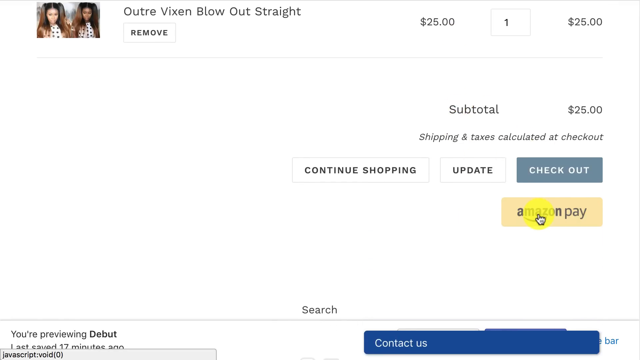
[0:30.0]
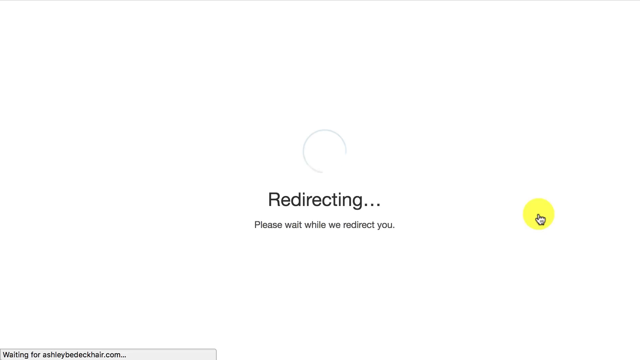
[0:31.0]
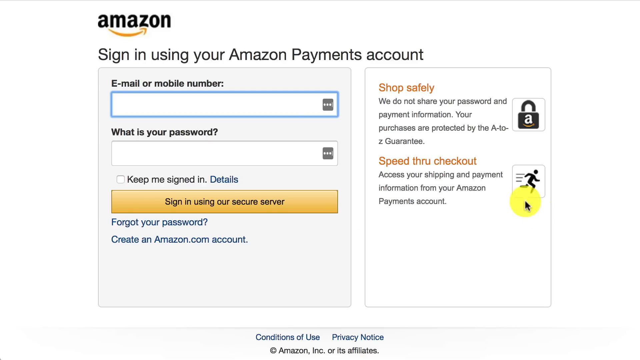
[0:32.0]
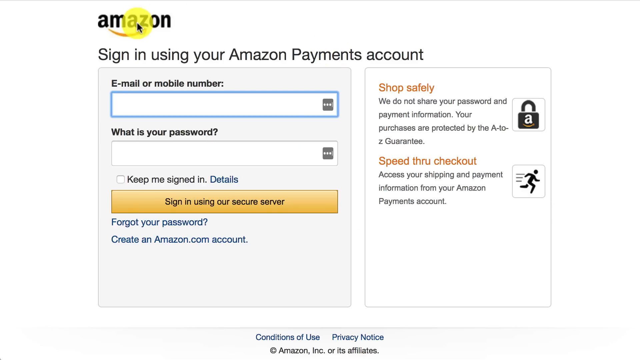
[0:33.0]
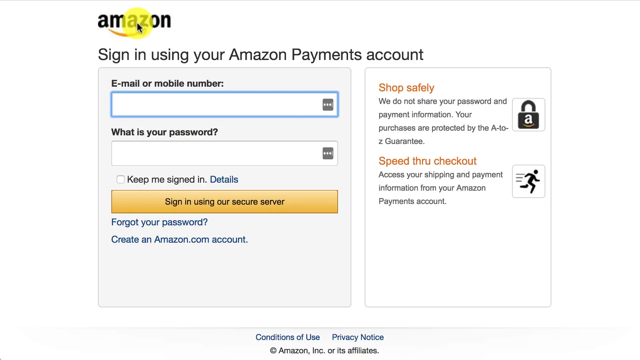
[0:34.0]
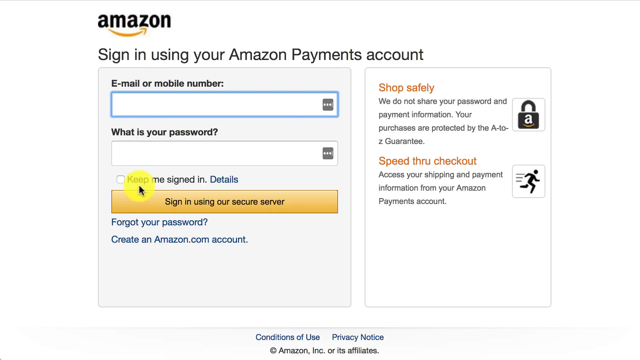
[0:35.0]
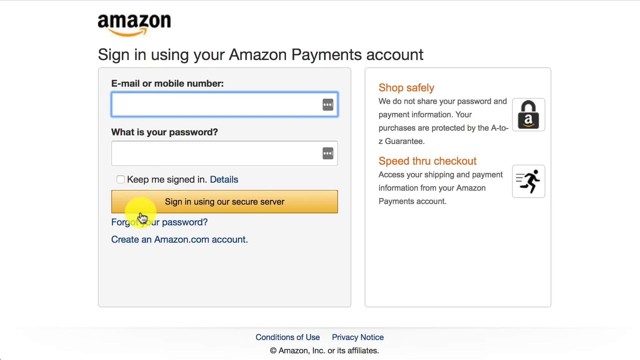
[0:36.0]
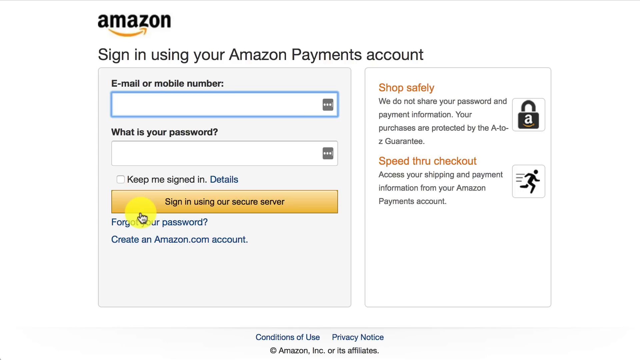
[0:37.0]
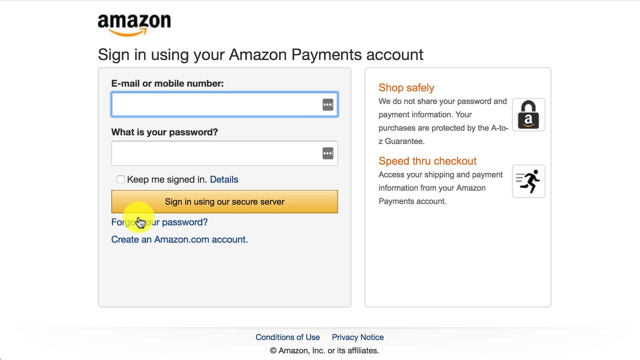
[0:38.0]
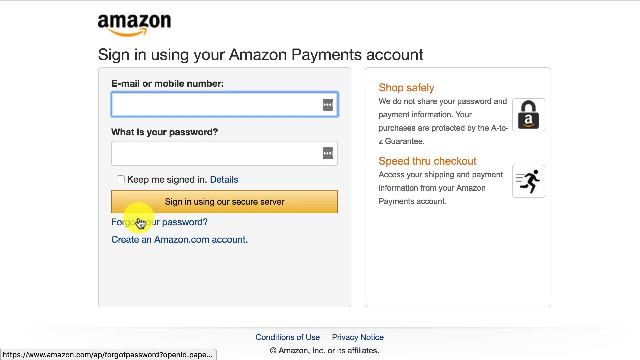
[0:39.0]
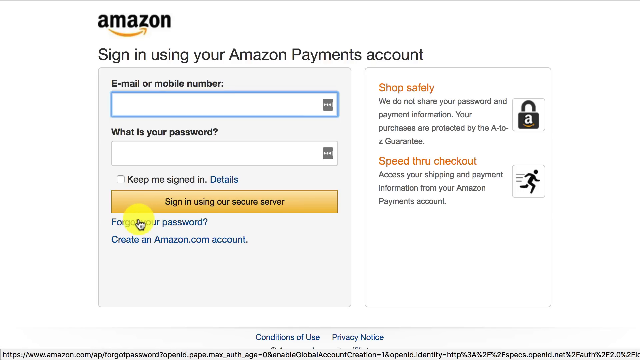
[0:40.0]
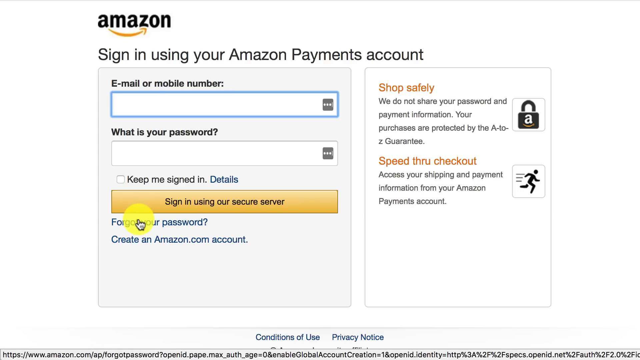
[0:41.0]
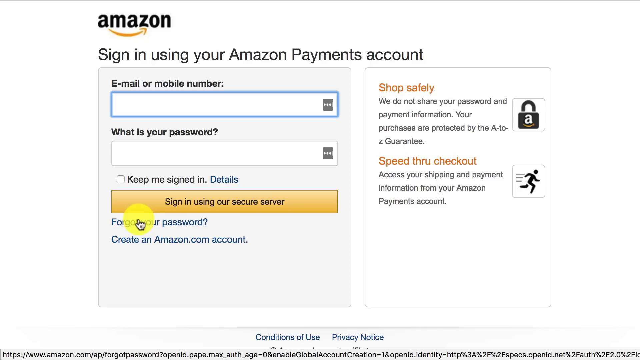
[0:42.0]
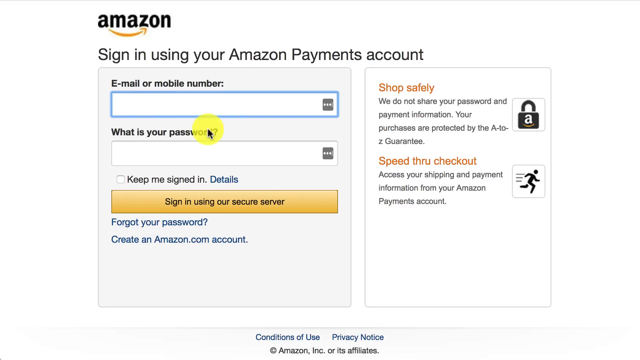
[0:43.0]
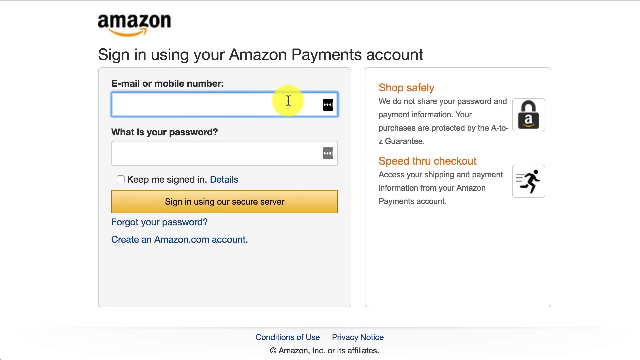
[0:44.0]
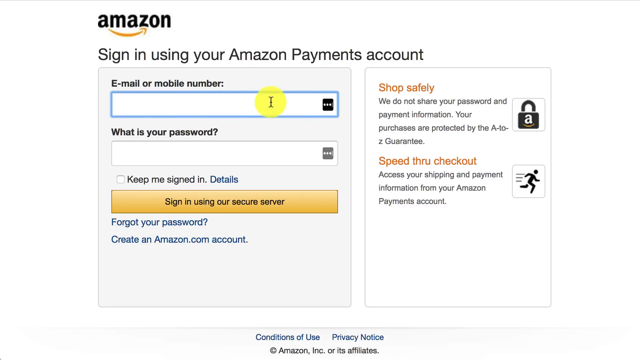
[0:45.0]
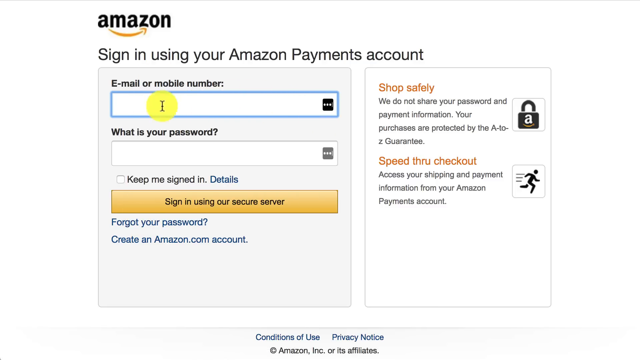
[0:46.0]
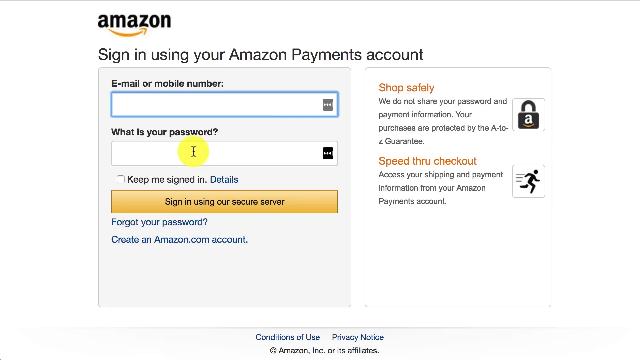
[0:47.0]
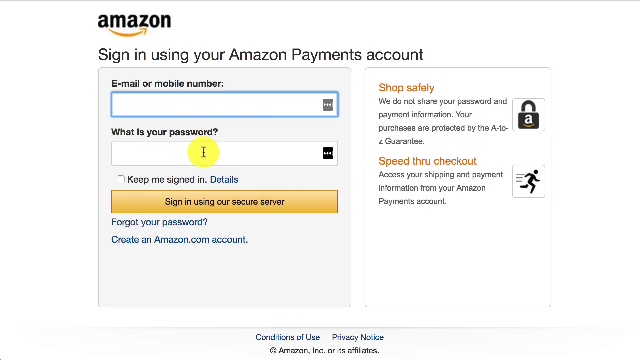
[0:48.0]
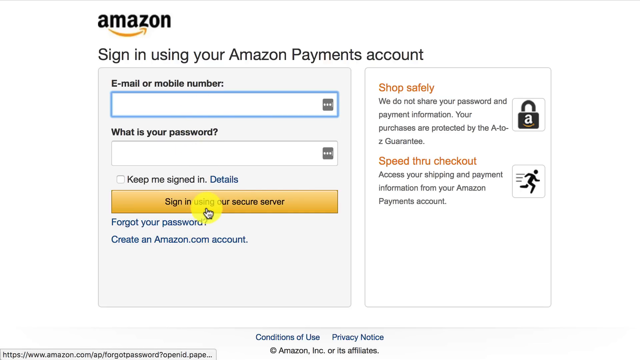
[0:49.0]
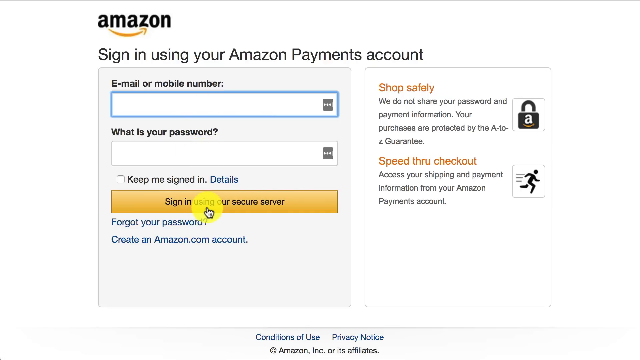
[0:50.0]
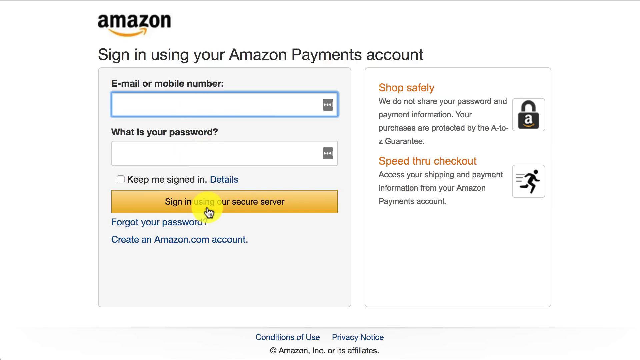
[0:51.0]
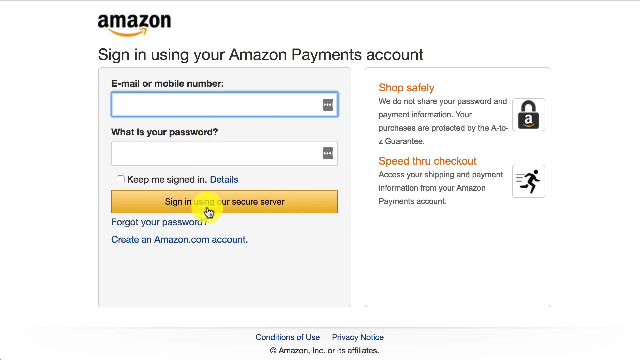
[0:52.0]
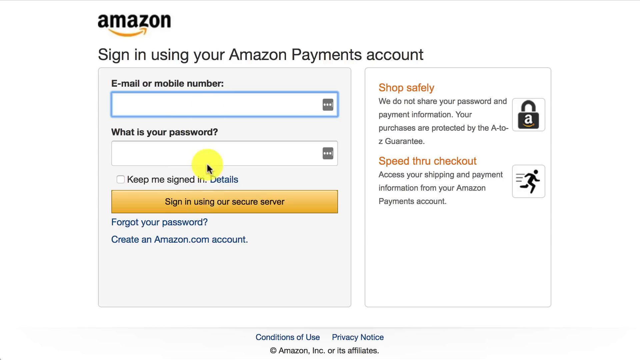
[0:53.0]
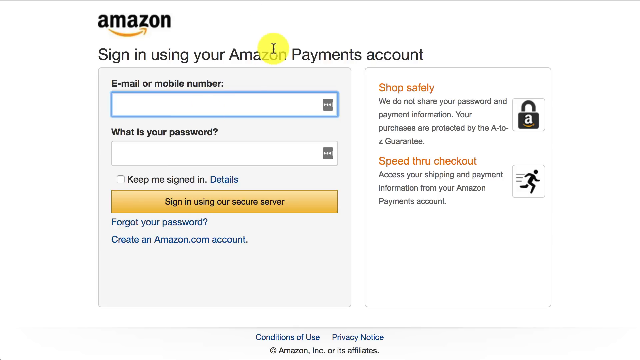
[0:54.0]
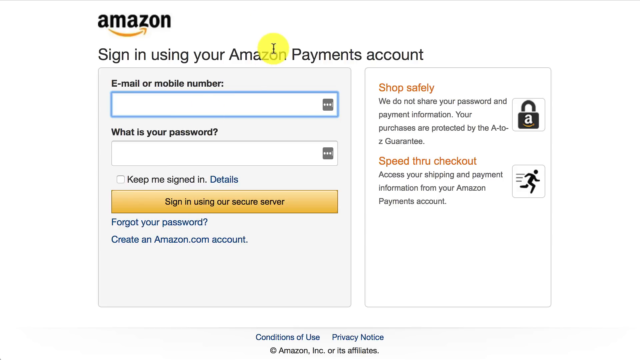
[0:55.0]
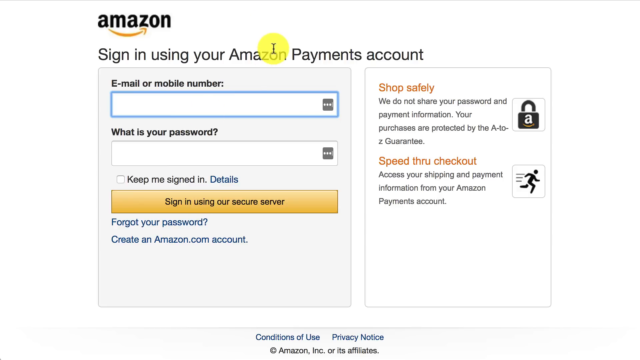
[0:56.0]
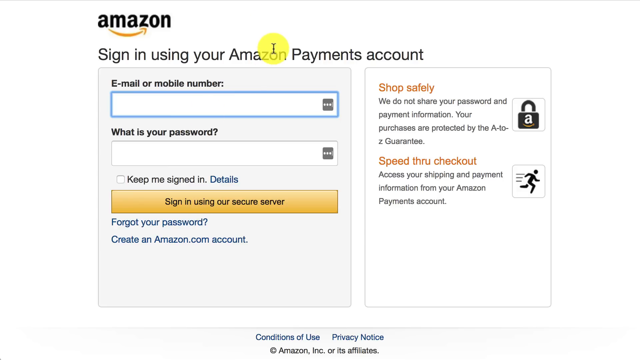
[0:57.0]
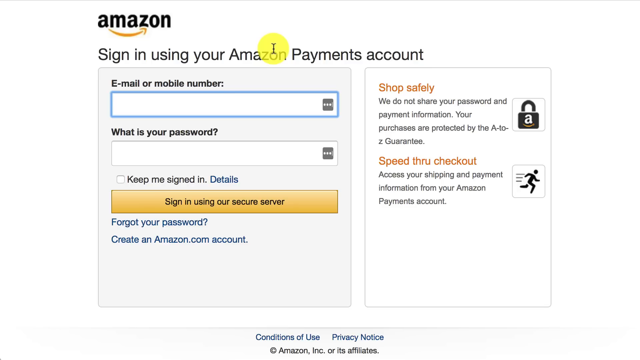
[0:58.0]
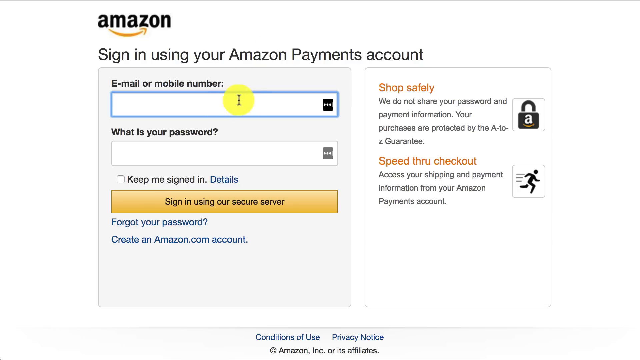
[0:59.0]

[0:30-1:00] The screen with Amazon Pay is shown, and Amazon Pay is selected. A redirecting screen appears that says "please wait while we redirect you," followed by an Amazon sign-in screen. At the top is Amazon with its logo, and underneath it says "sign in using your Amazon Payments account." There are fields to sign in with either an email or mobile number and a password. Below these is an option to keep me signed in, then the sign in button, then a forgot your password link, and below that an option to create an Amazon.com account. Over to the right are details on how to shop safely, reading "we do not share your password and payment information," "Your purchases are protected by the A to Z guarantee," and underneath, "speed through checkout" and "access your shipping and payment information from your Amazon Payments account."